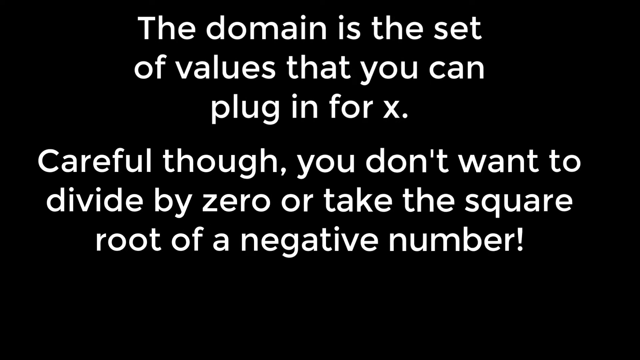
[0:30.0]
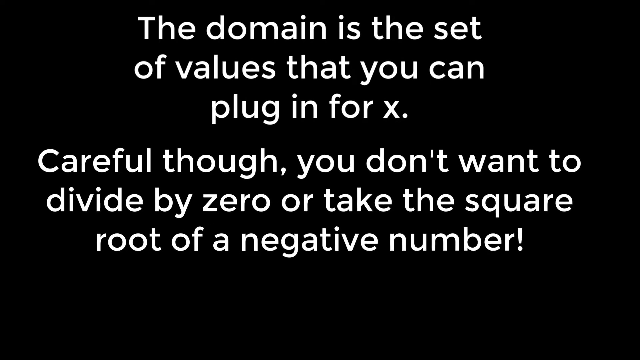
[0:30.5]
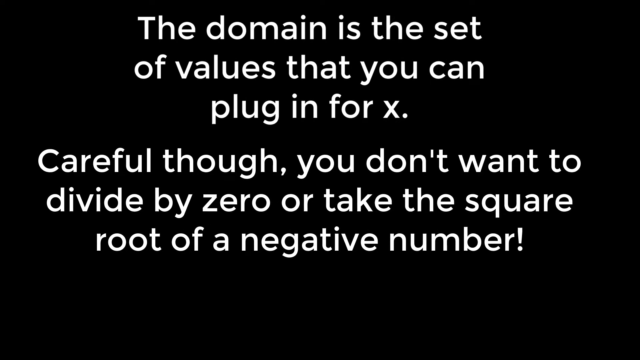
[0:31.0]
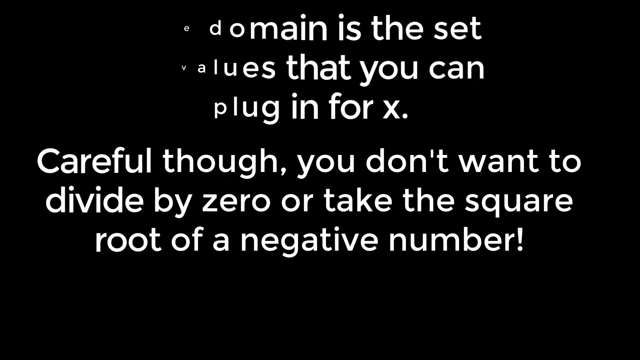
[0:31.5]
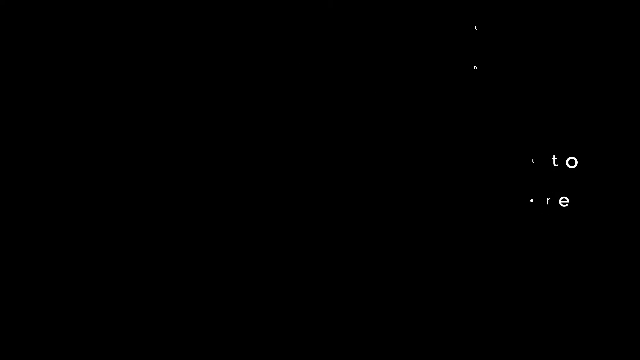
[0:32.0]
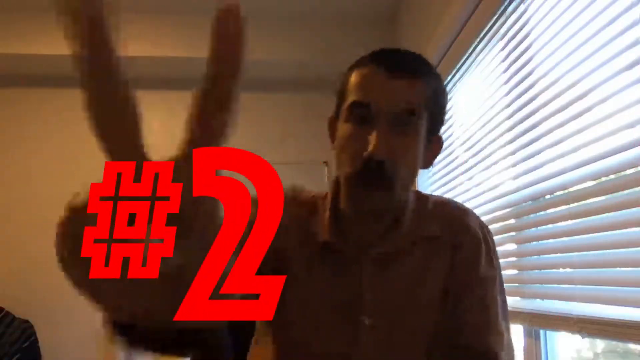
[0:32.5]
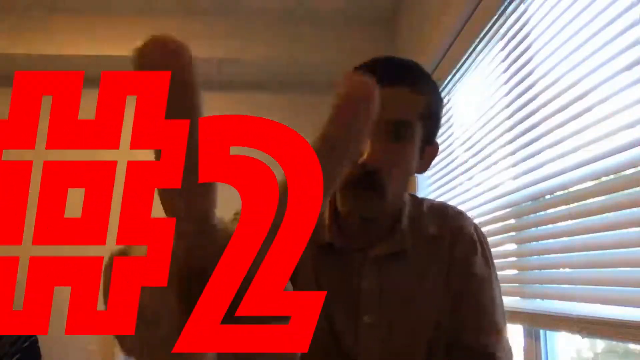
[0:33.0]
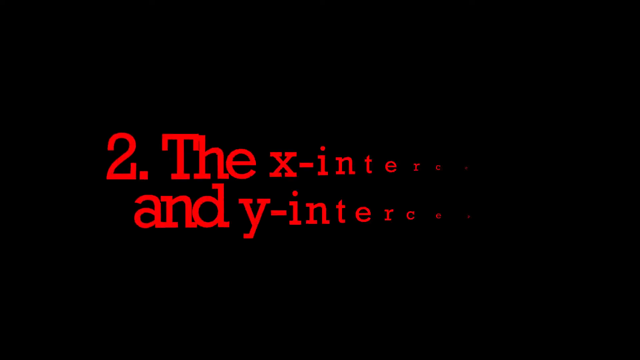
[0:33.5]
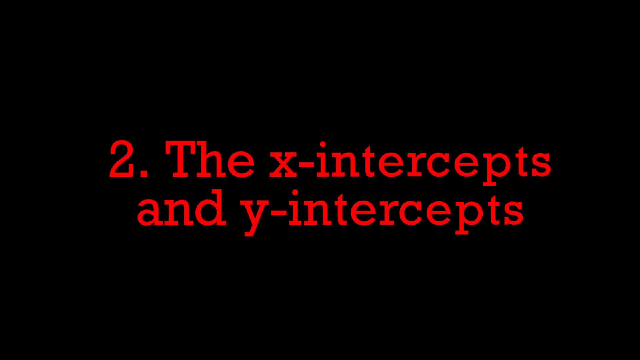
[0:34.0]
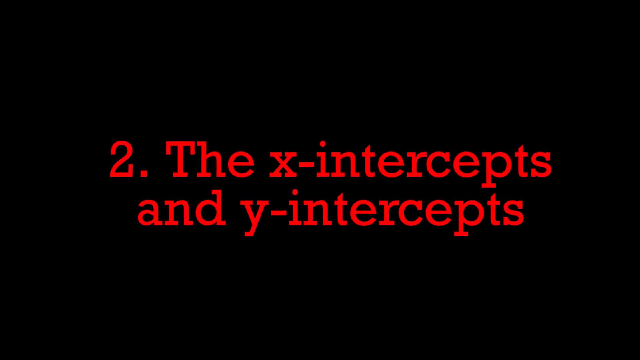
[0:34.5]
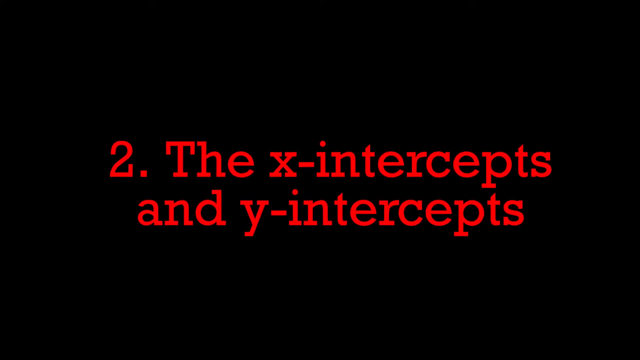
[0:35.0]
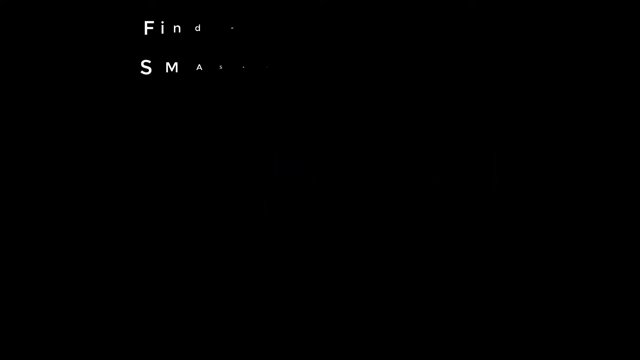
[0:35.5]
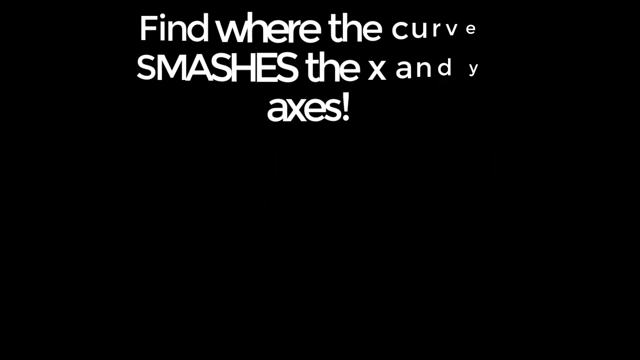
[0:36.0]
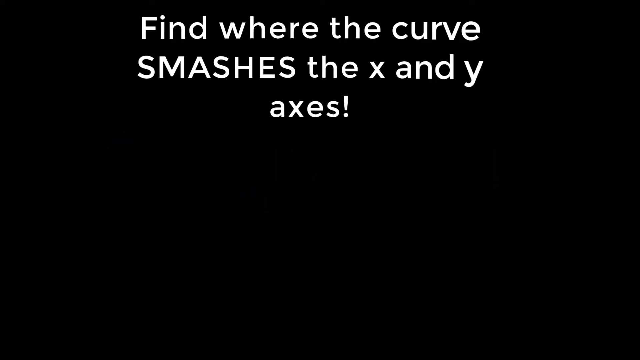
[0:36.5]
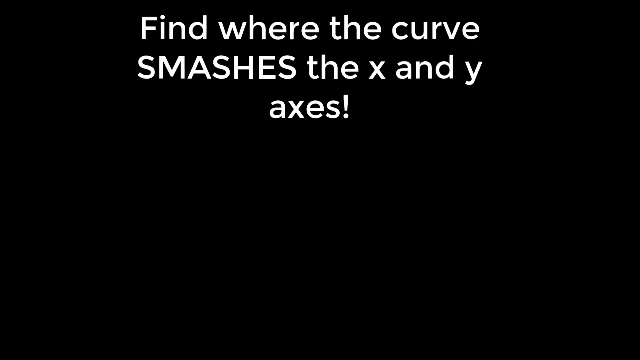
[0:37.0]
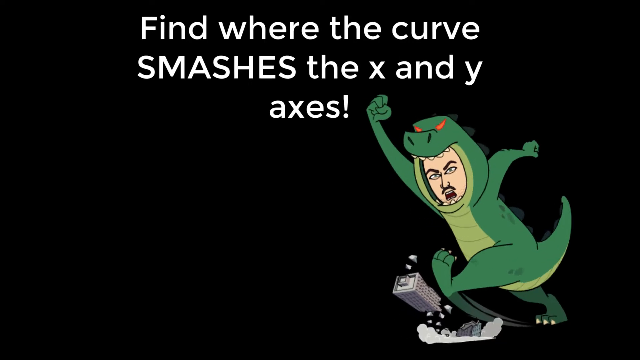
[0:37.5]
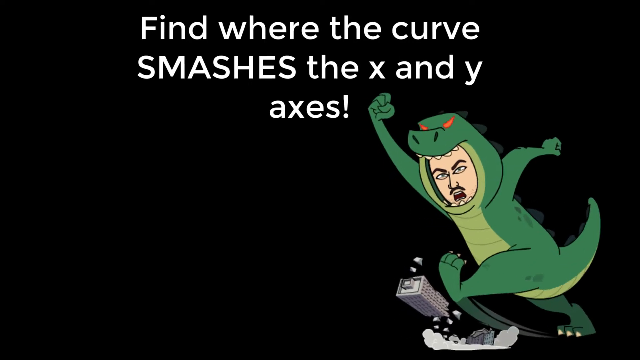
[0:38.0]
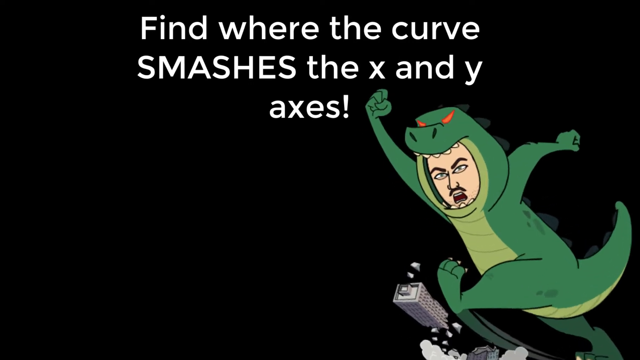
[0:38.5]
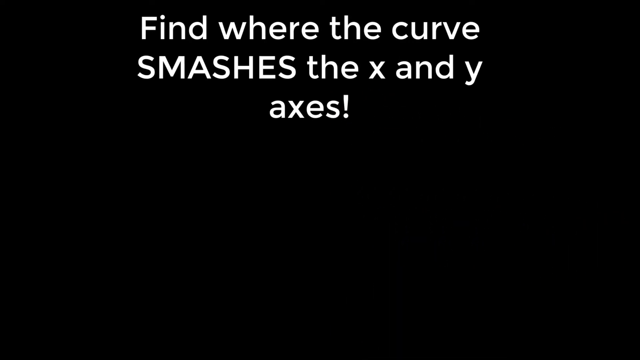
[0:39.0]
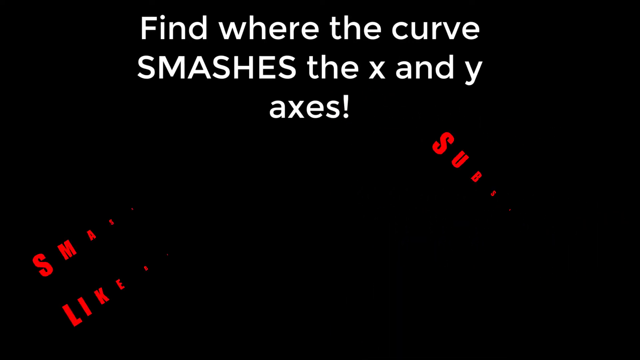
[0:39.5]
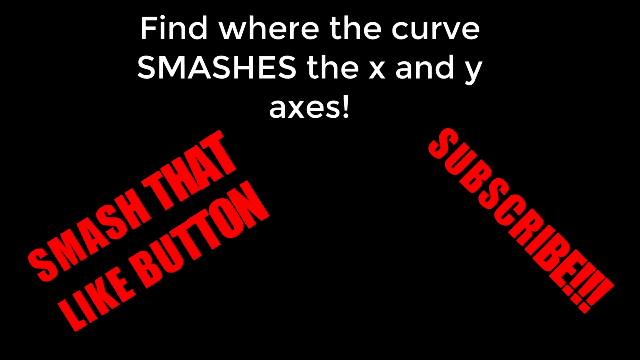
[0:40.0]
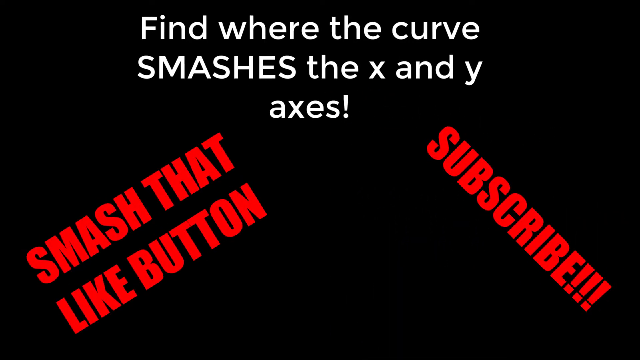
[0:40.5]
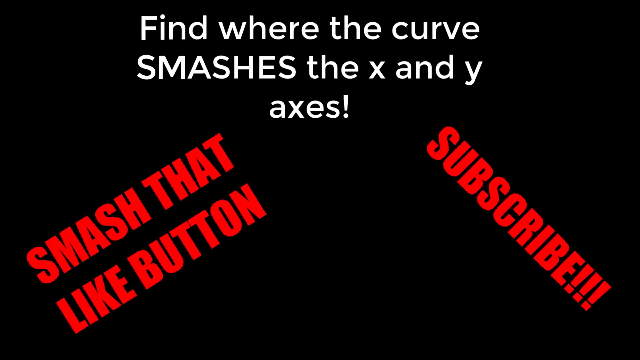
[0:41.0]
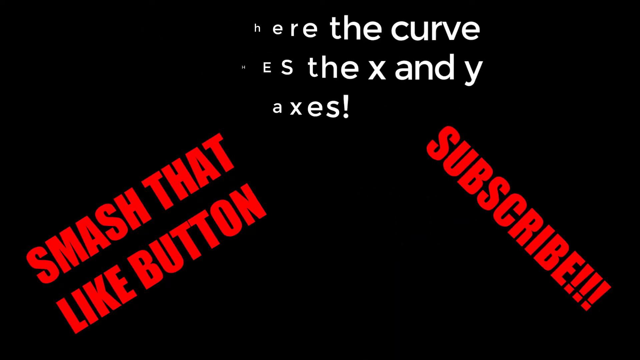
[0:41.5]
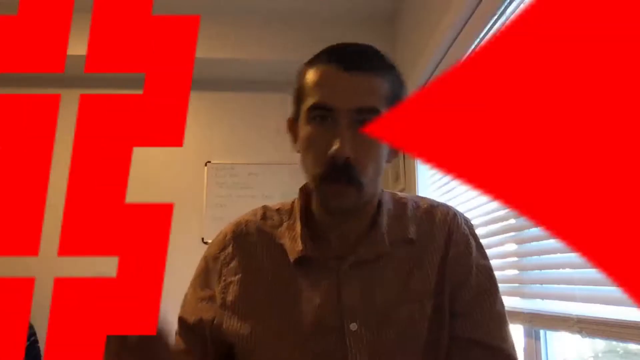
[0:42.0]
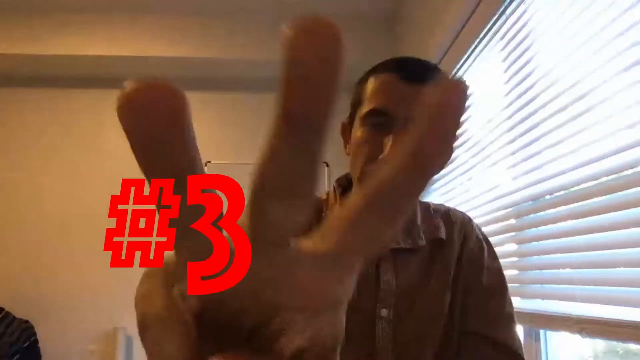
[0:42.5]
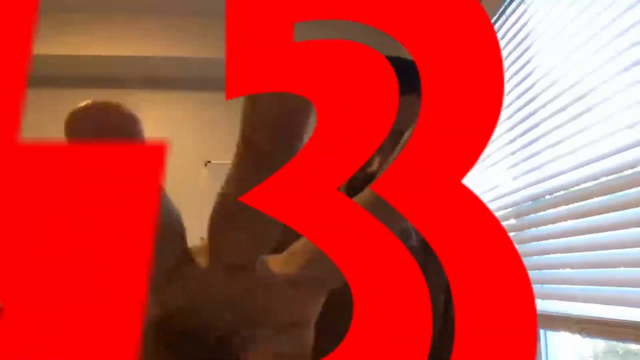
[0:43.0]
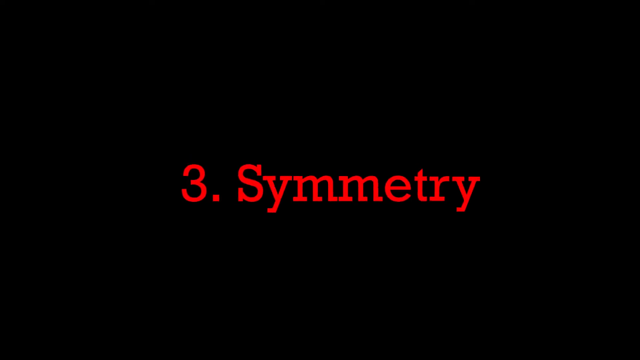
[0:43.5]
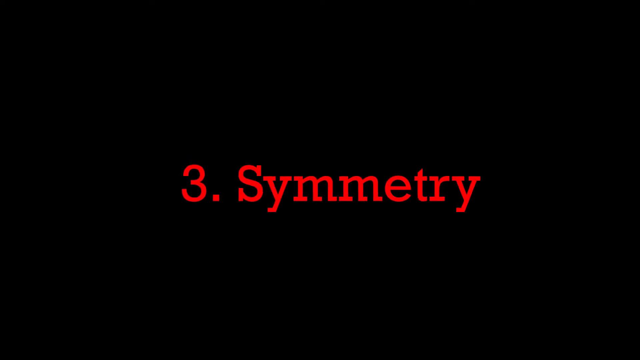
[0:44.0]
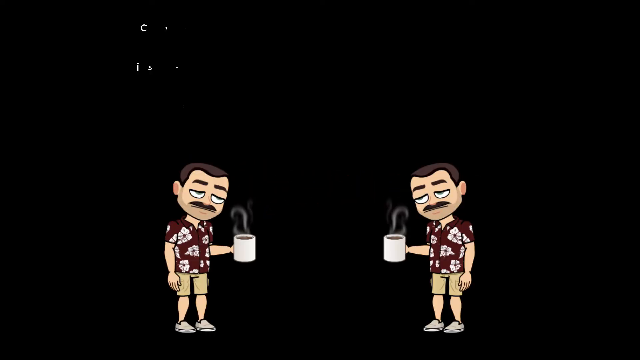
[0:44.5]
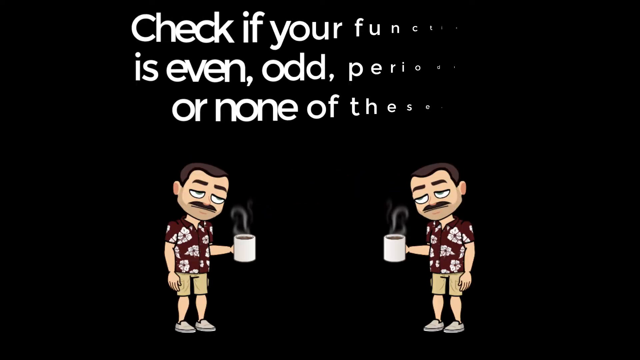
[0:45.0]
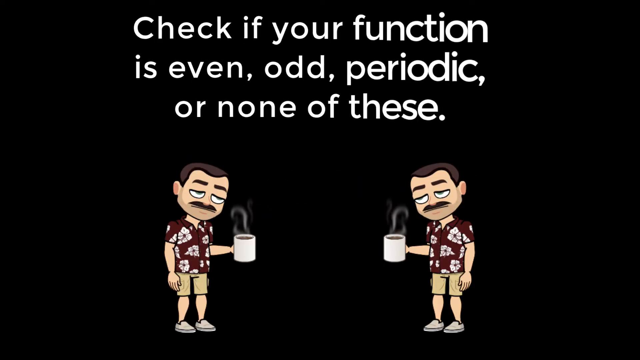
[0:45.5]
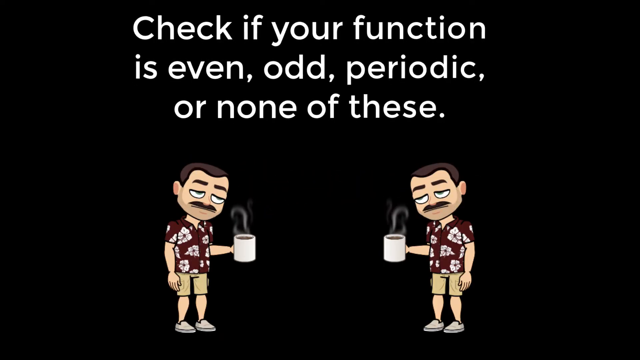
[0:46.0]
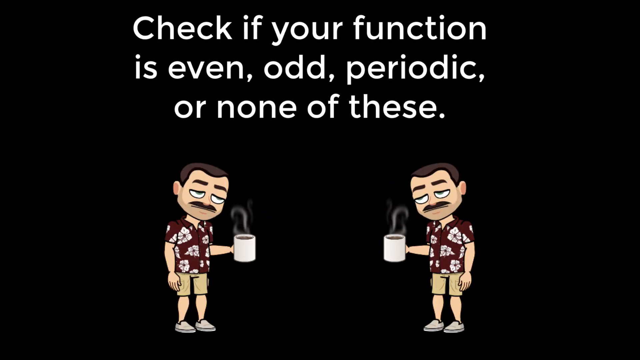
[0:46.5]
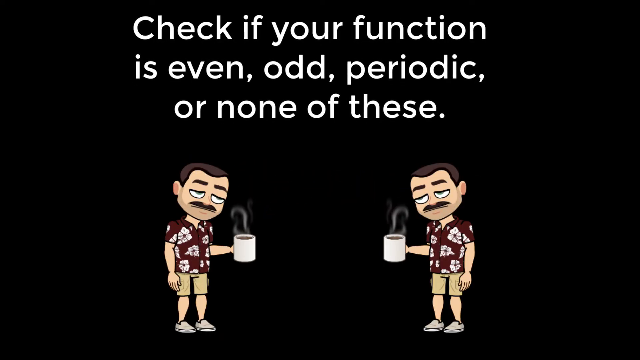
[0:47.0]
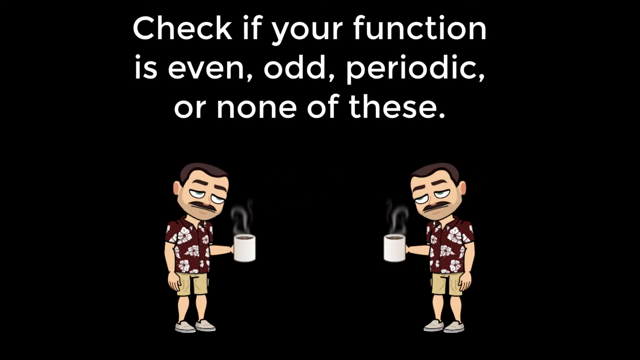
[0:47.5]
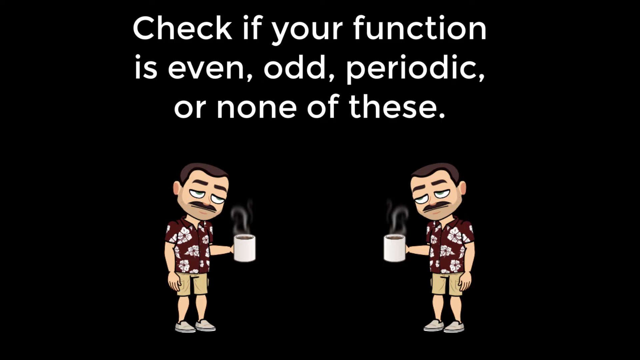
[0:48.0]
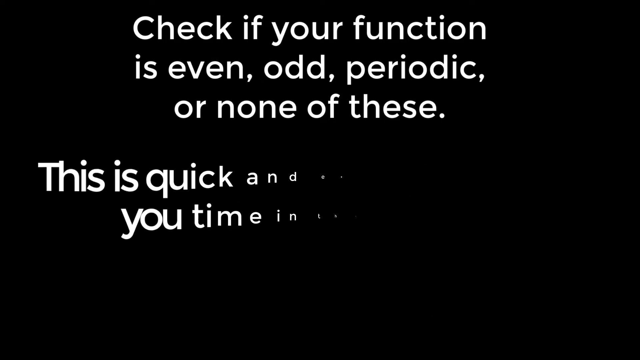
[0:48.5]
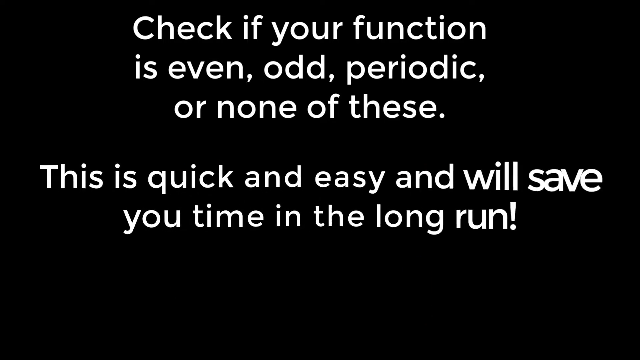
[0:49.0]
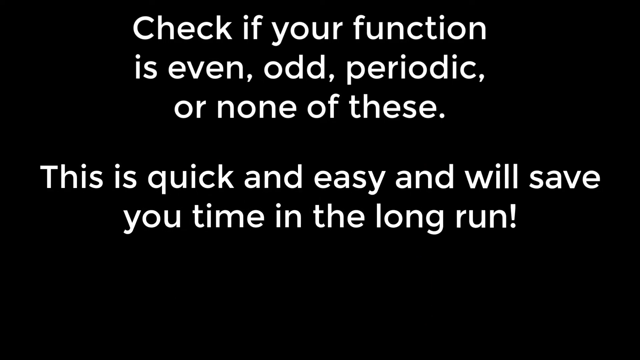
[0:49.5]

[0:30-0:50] White sentences on a black background say "the domain is a set of values that you can plug in for x. Careful though, we don't want to divide by zero but take the square root of a negative number." They disappear and the video returns to the man in the room wearing a collared shirt, with a brown mustache and brown hair. A red number two appears on the left side of the screen and the man holds out his right hand showing two fingers. On a black background, red text says "2. the x-intercepts and y-intercepts." It is replaced by text at the top reading "find where the curve smashes the x and y axis." At the bottom right, a cartoonish figure in a dinosaur costume appears kicking over a skyscraper; inside the costume is a man with a brown mustache. The figure flips to the left and disappears. Then the left side of the black background says "smash that like button" and the right side says "subscribe." The scene changes to the man in the room with a collared shirt, brown mustache and brown hair. A red number three appears in the bottom left, and he holds up three fingers on his right hand. A black background returns with red text saying "3. symmetry." Next, two cartoonish figures on the left and right, both representing the man, hold coffee and look down, while the top says "check if your function is even, odd, periodic or none of these." The figures disappear and are replaced by a sentence: "this is quick and easy and will save you time in the long run."